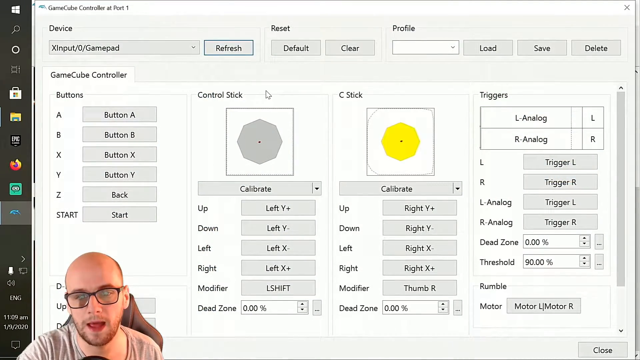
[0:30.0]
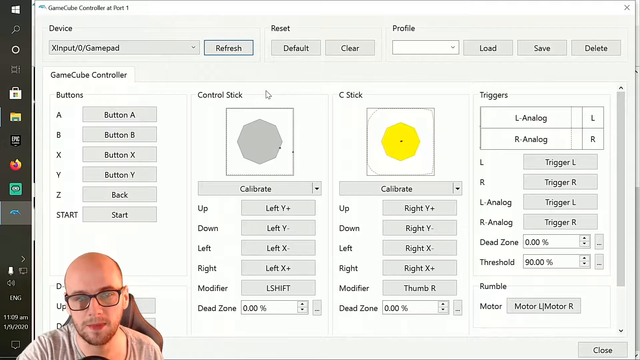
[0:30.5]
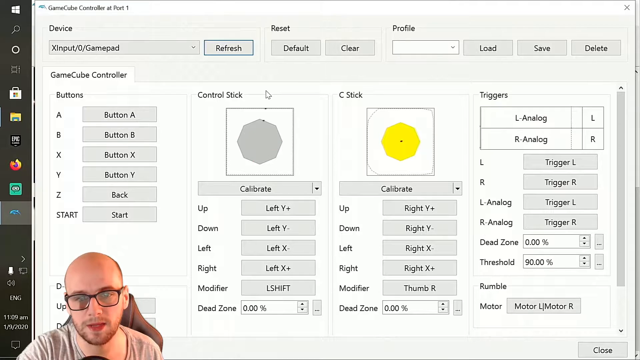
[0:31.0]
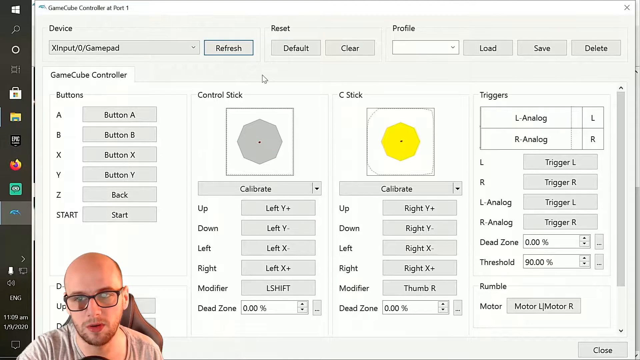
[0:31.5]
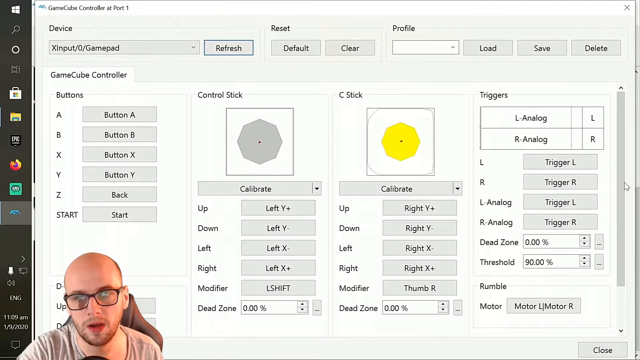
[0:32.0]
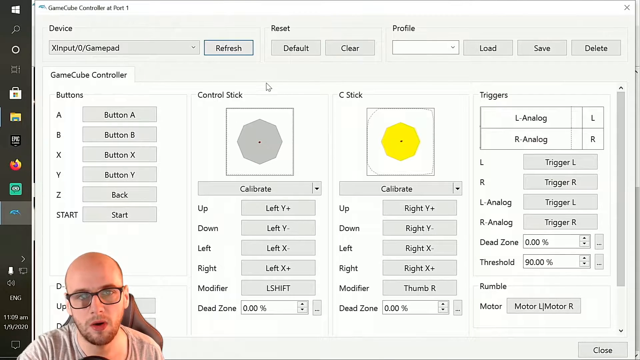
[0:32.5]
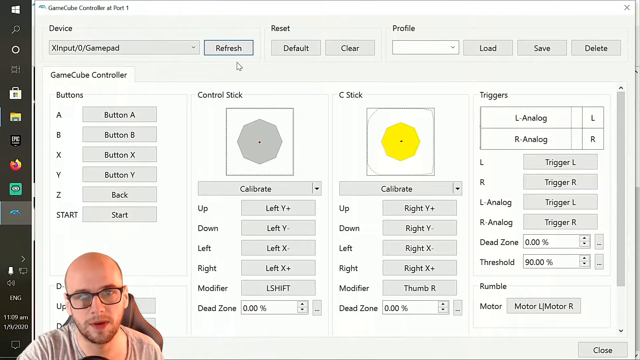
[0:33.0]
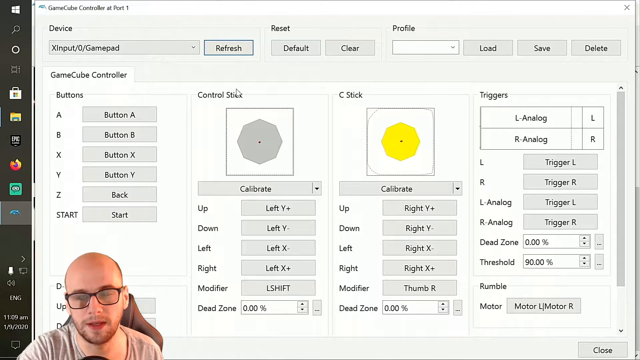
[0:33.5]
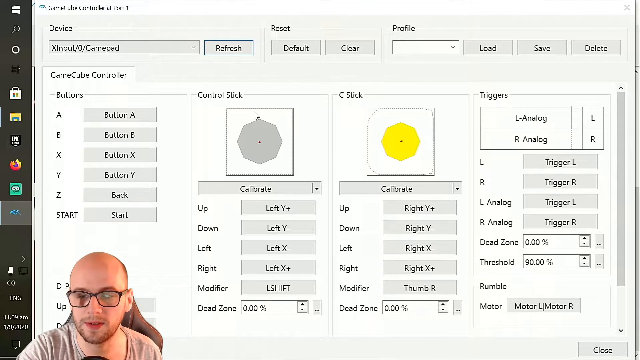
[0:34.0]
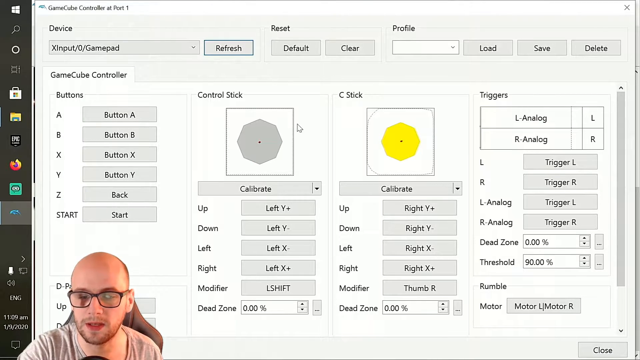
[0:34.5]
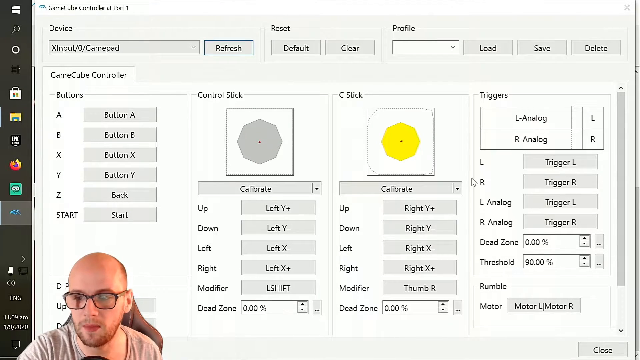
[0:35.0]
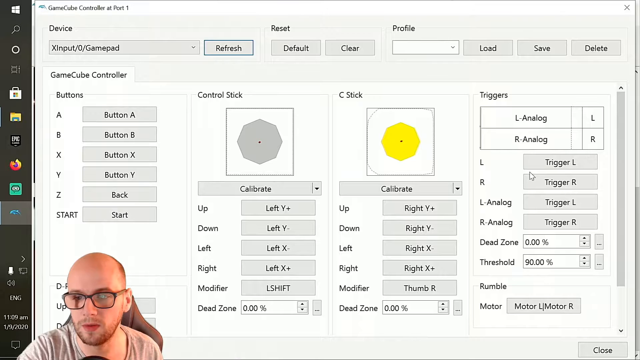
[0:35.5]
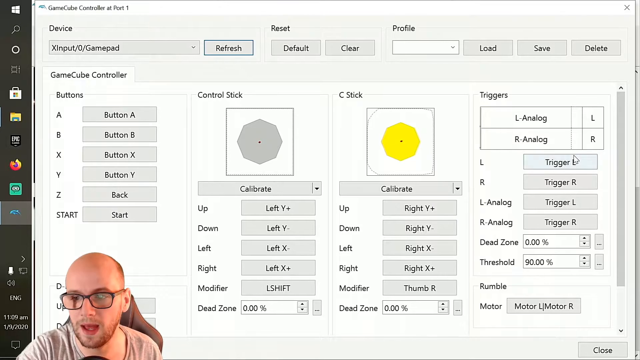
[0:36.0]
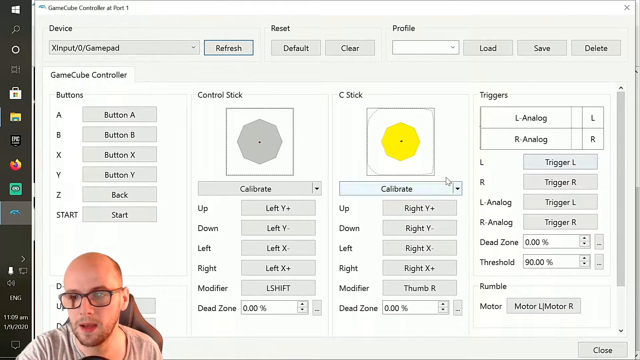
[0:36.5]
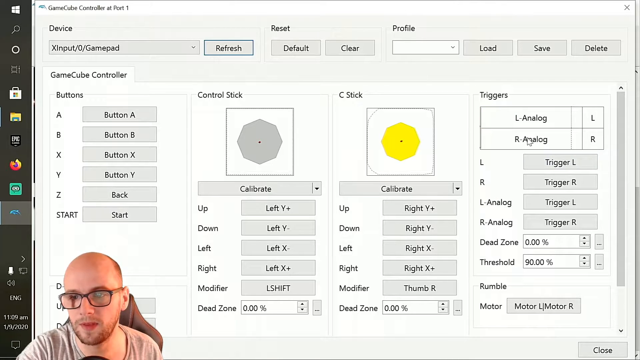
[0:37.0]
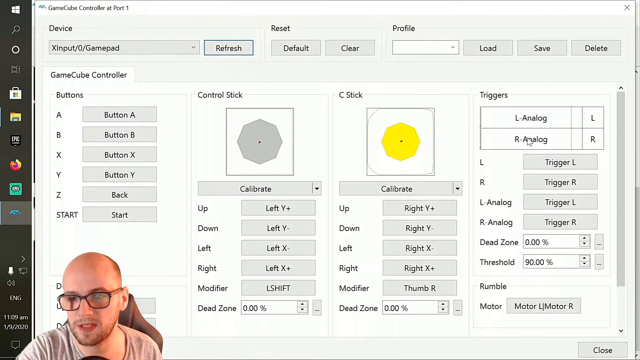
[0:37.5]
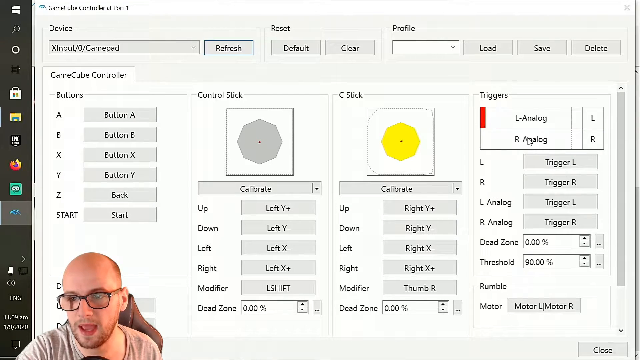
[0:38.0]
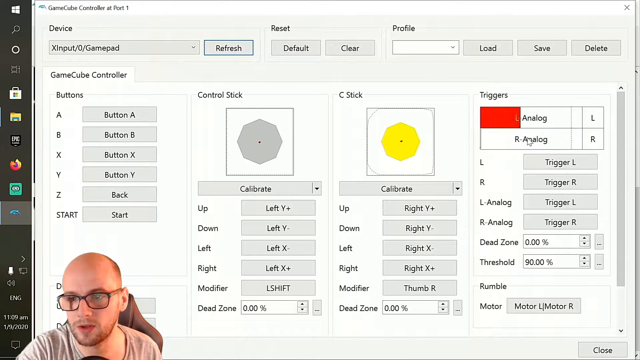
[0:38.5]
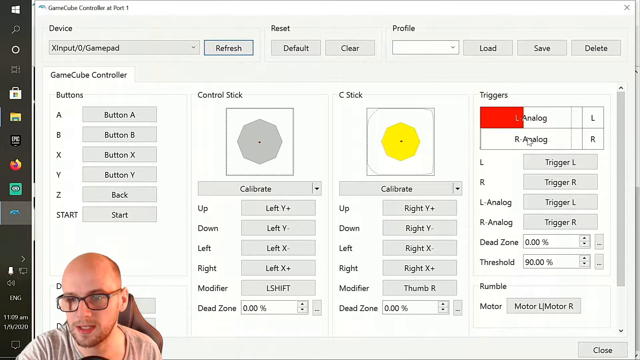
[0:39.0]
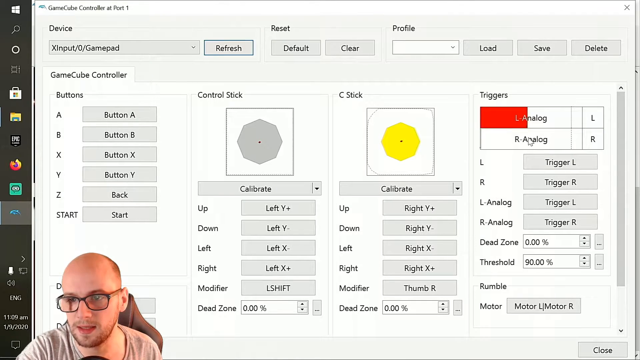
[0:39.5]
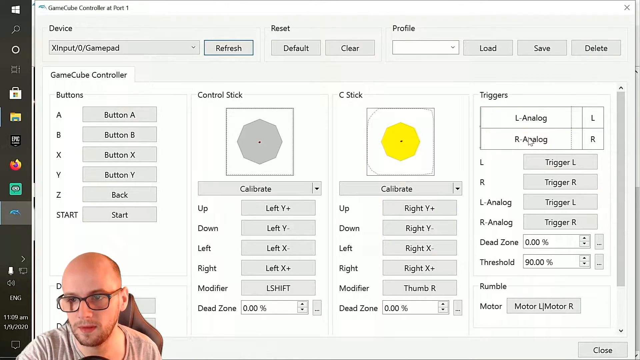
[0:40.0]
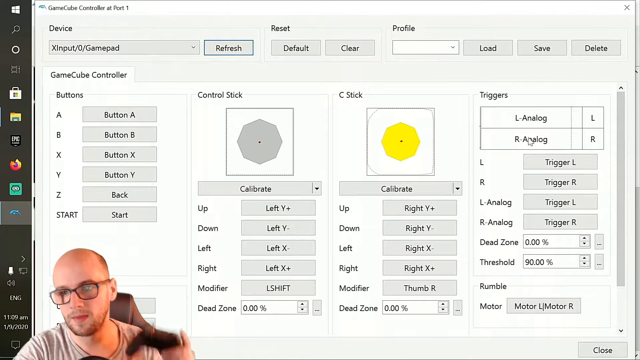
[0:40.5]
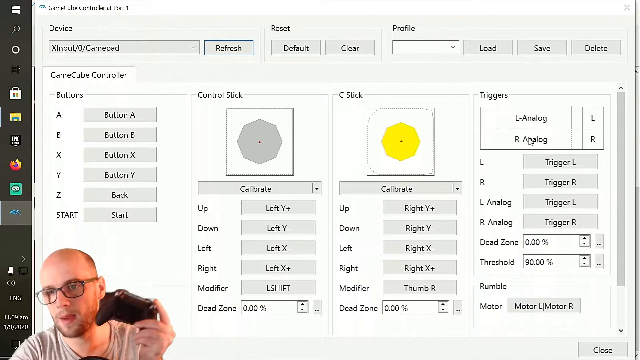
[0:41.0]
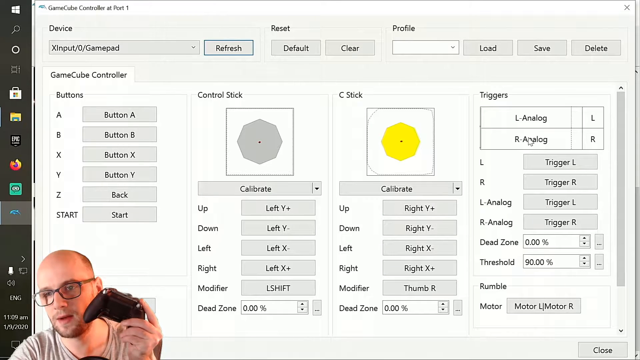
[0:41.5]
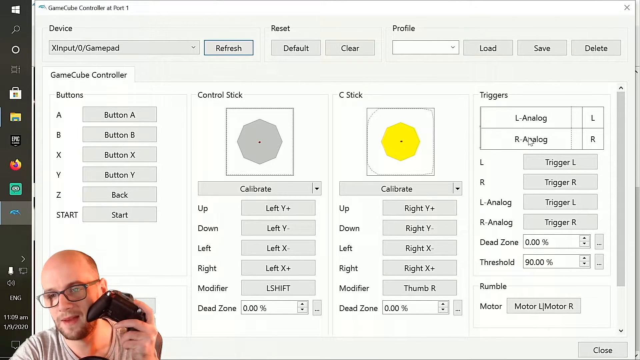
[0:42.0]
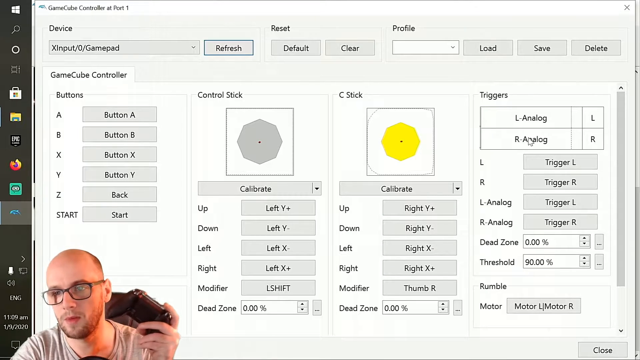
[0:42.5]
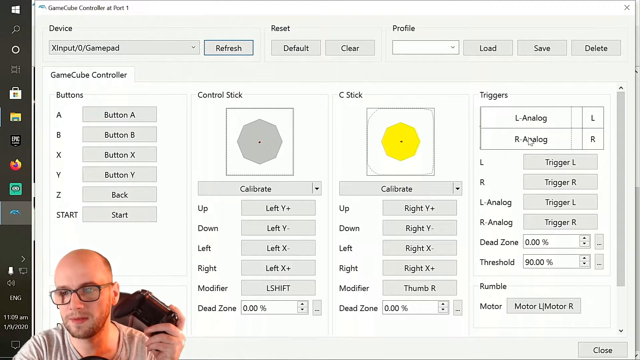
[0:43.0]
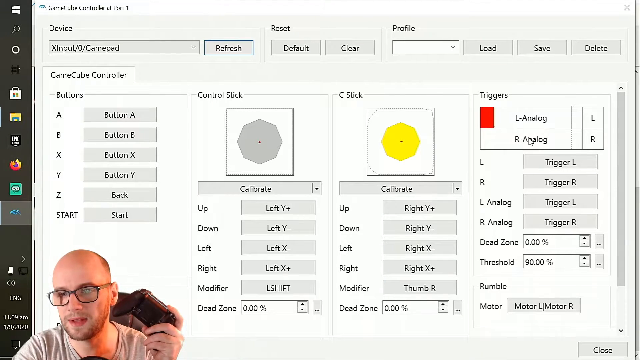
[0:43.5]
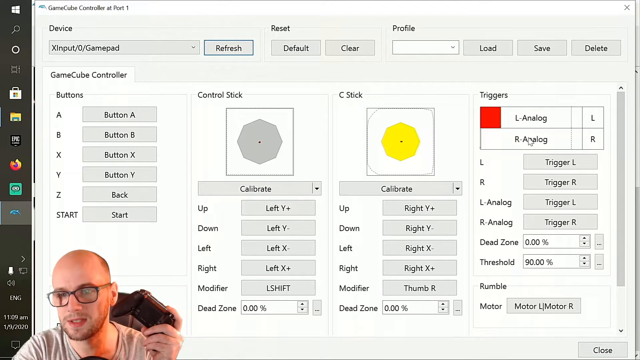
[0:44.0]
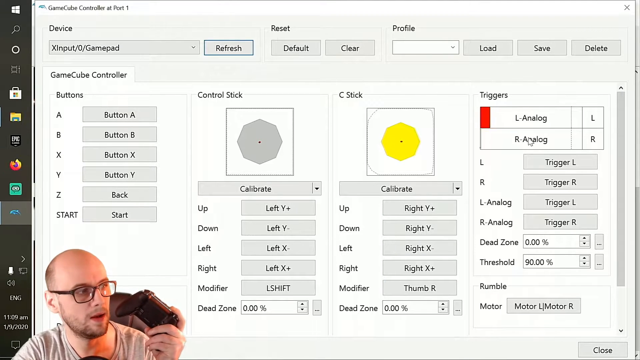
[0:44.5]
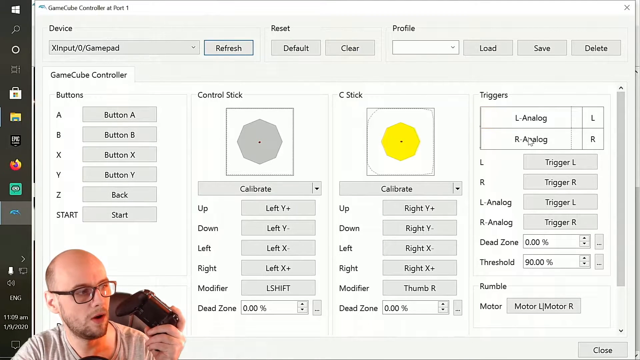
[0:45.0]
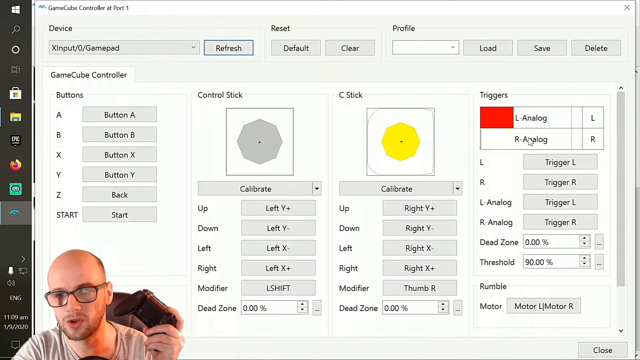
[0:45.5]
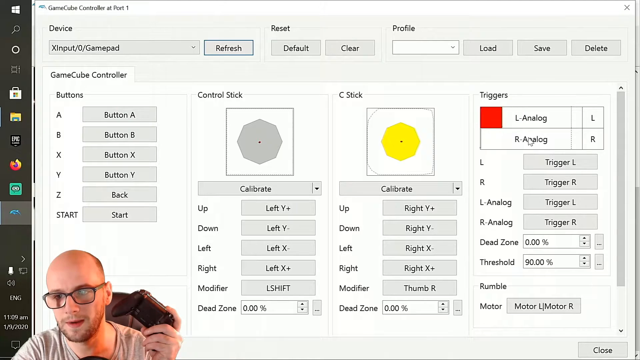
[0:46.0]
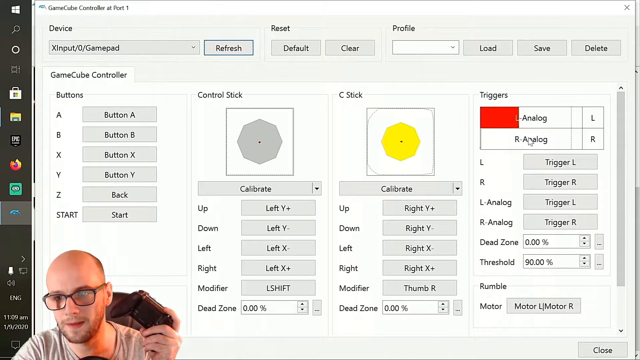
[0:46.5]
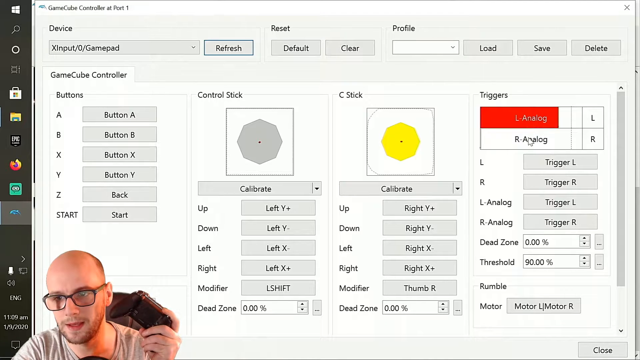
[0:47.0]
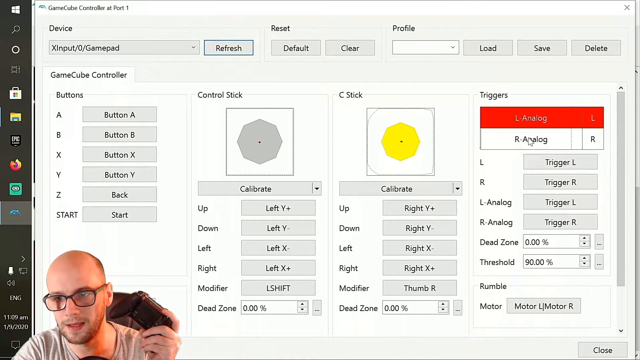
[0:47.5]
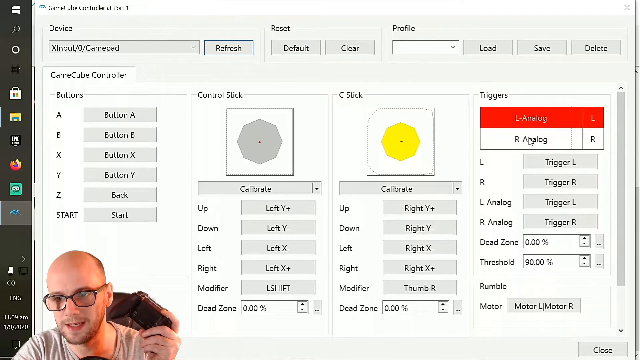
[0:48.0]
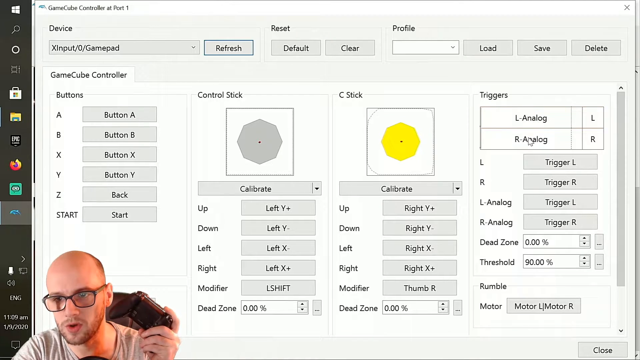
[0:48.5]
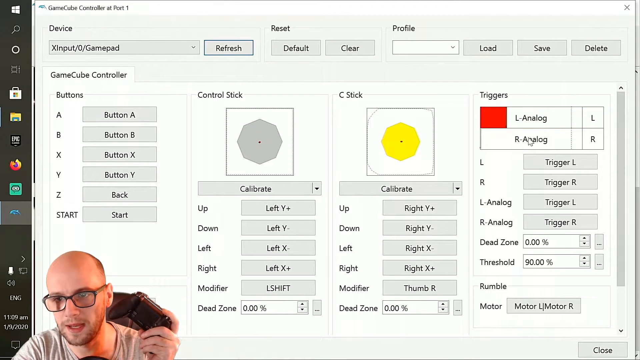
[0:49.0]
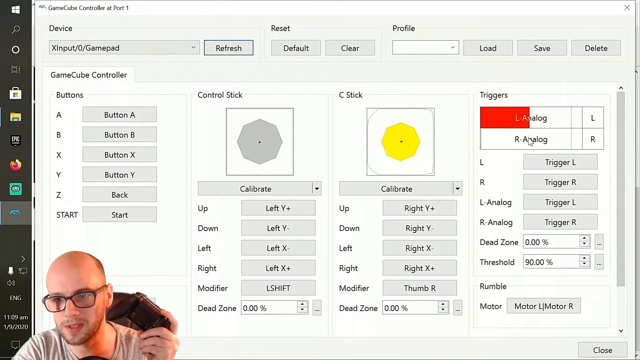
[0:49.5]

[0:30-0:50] A screen full of video game information is up, with a menu down the side, while the man who made the video talks in the lower left-hand corner. Along the top are areas labeled "device", "reset" and "profile". Down the left side are "button A", "button B", "button X", "button Y", "back" and "start". In the middle is a control stick shown as a gray shape kind of like a hexagon, and a C stick of the same shape in yellow. The man talks as he moves his cursor to the control stick, then to trigger L. He highlights L analog and makes the red area on it big, holding up the Xbox controller as the red space on the L analog section grows. L analog has a capital letter L beside it and R analog has a capital letter R beside it. Below those sections are a trigger L, a trigger R, a trigger L and a trigger R.